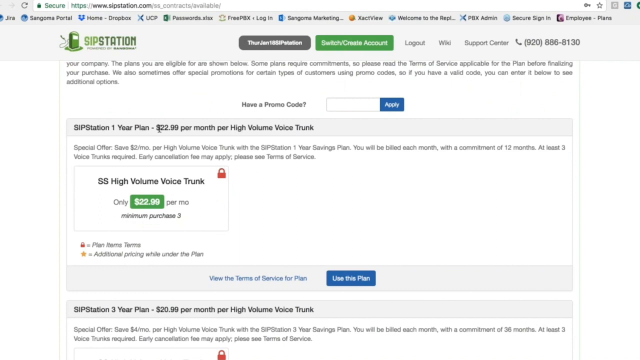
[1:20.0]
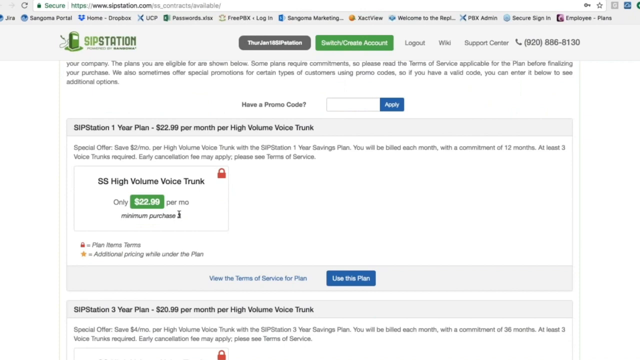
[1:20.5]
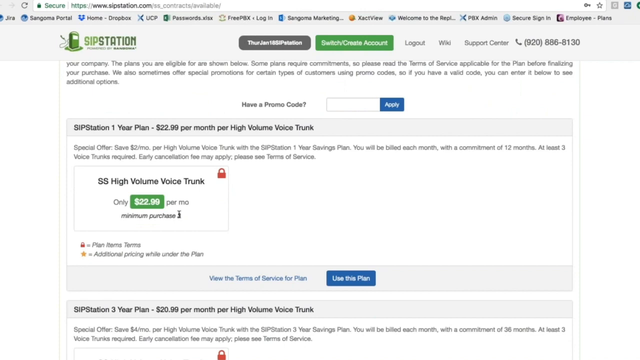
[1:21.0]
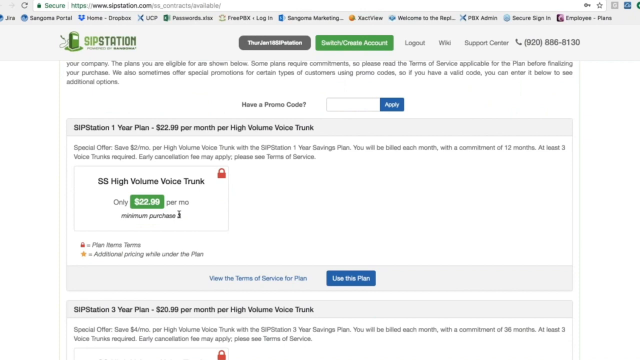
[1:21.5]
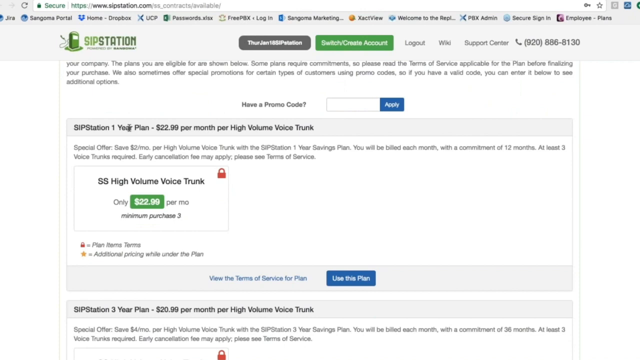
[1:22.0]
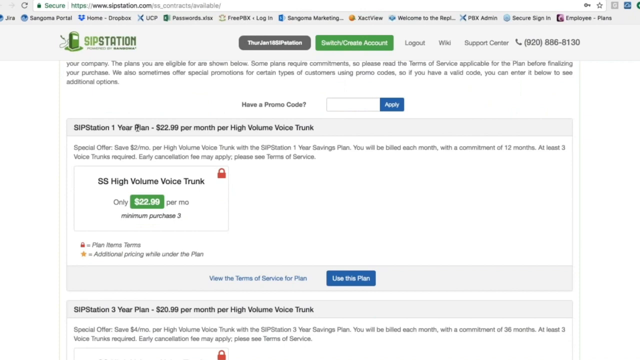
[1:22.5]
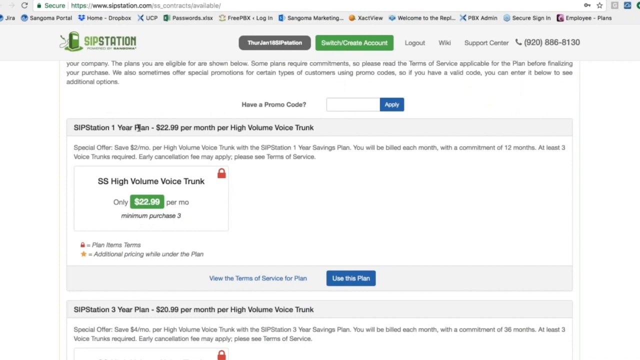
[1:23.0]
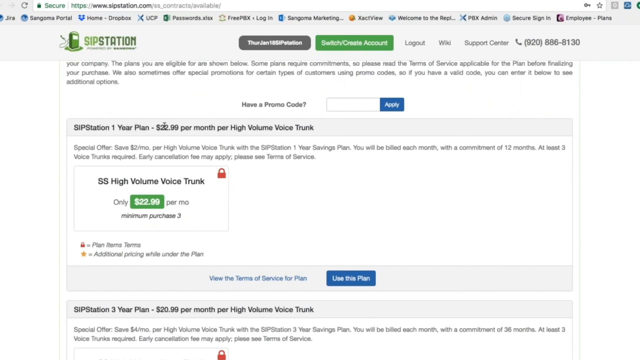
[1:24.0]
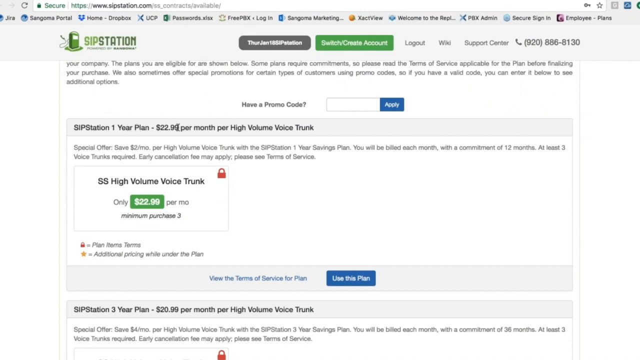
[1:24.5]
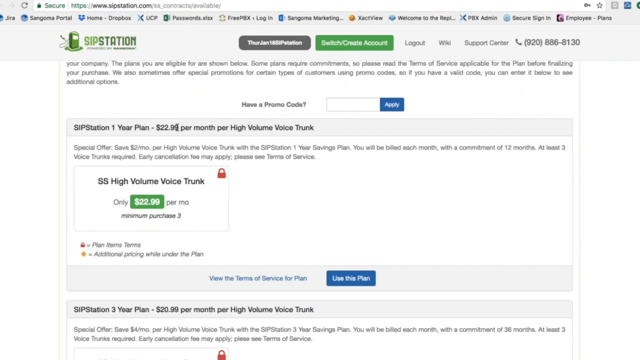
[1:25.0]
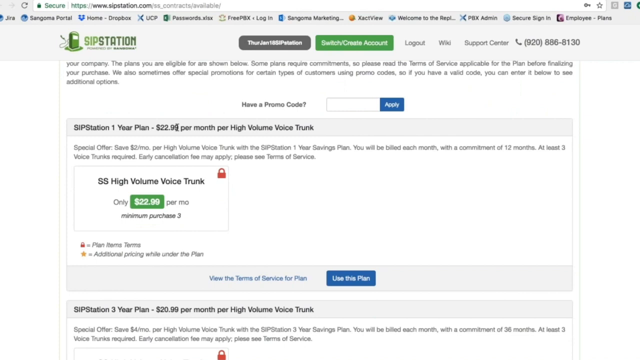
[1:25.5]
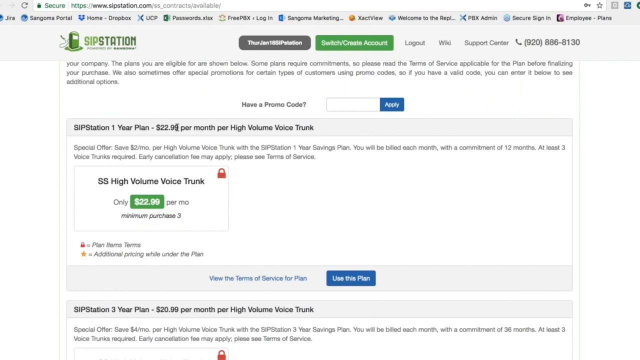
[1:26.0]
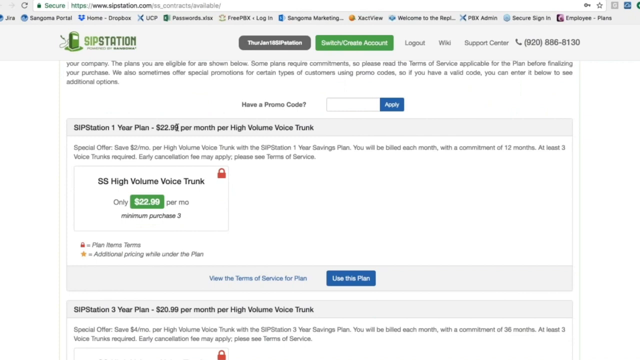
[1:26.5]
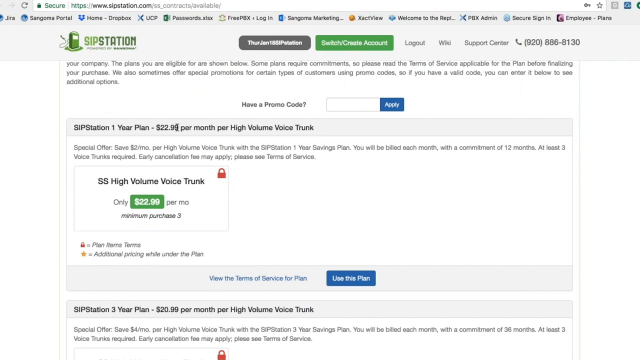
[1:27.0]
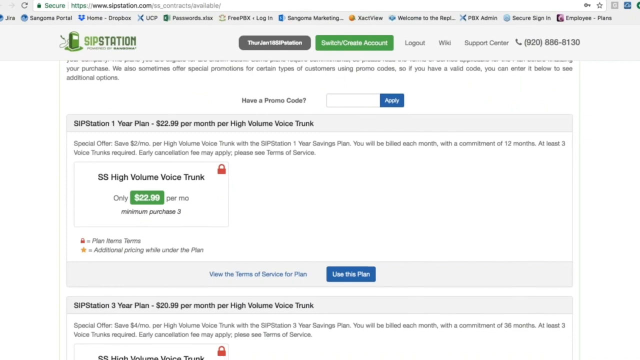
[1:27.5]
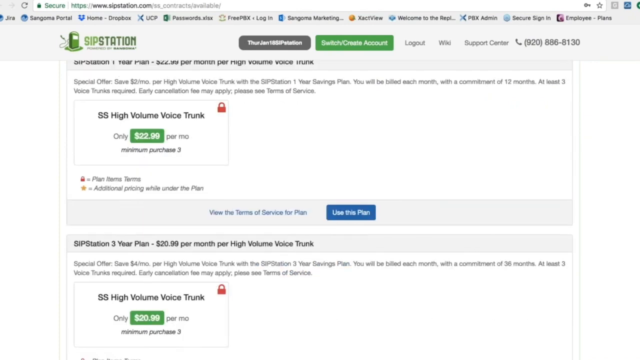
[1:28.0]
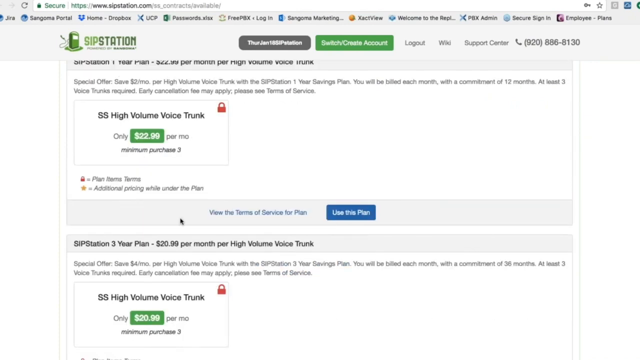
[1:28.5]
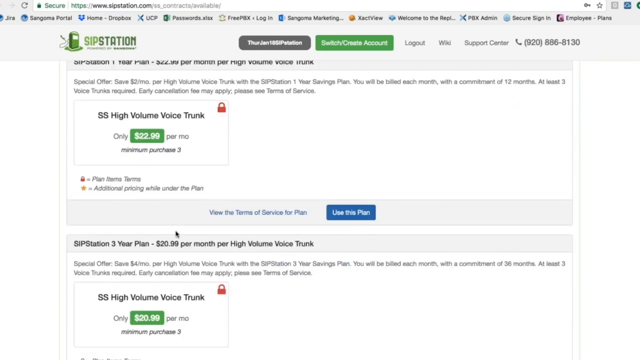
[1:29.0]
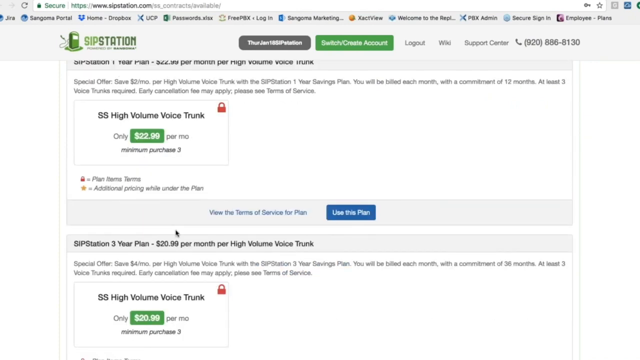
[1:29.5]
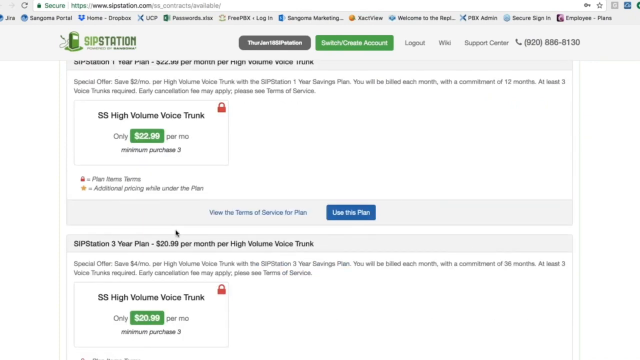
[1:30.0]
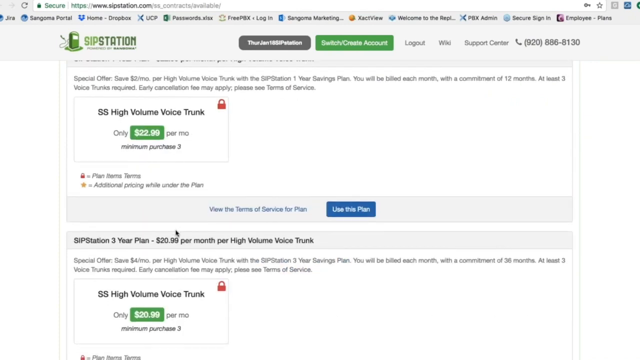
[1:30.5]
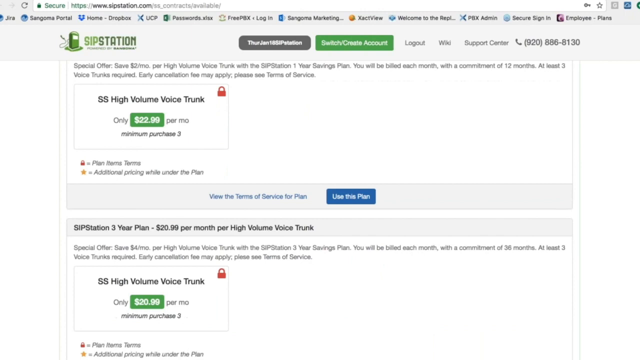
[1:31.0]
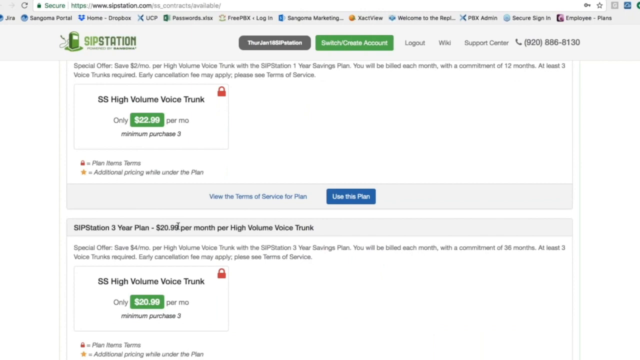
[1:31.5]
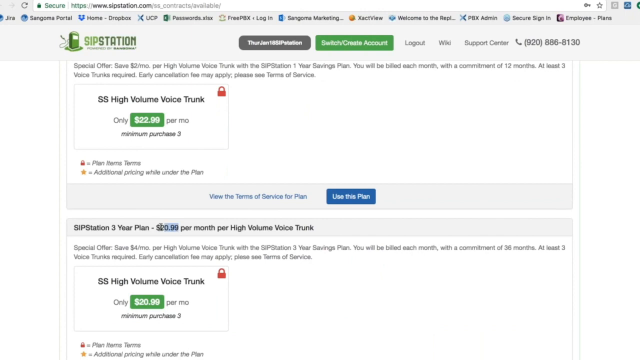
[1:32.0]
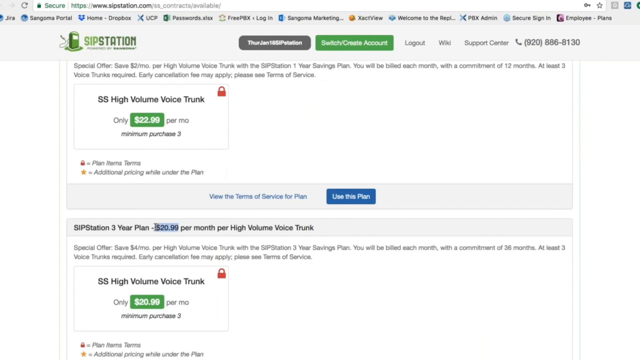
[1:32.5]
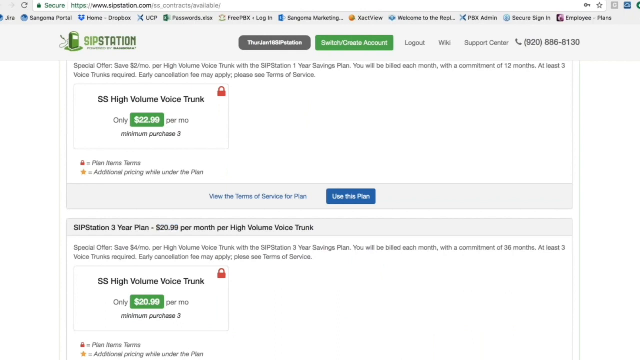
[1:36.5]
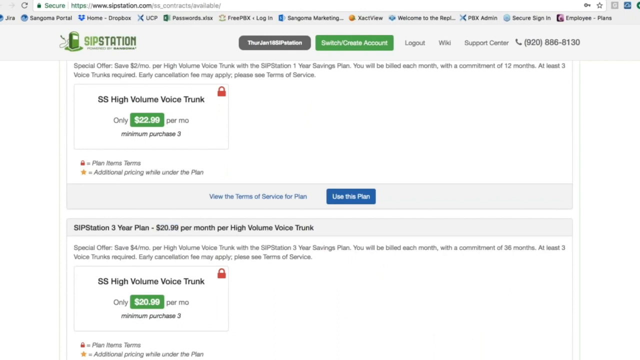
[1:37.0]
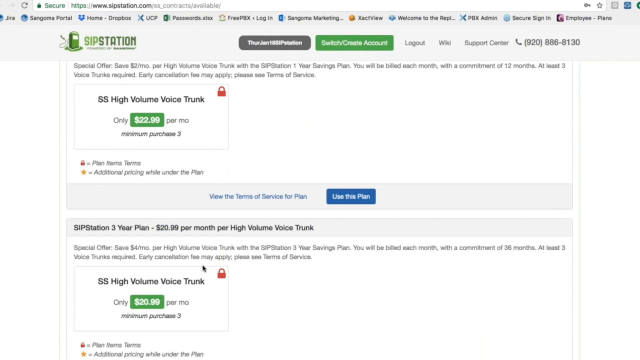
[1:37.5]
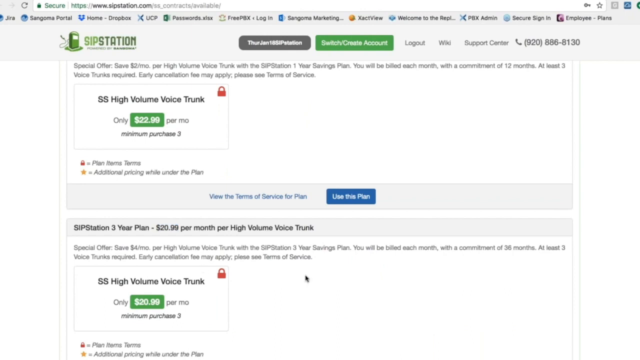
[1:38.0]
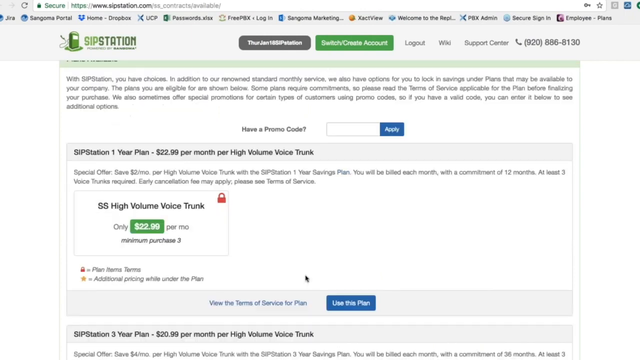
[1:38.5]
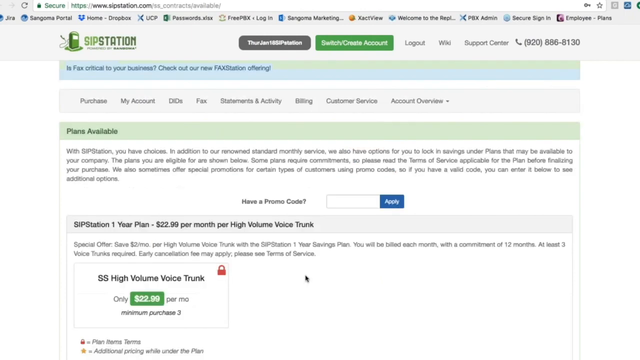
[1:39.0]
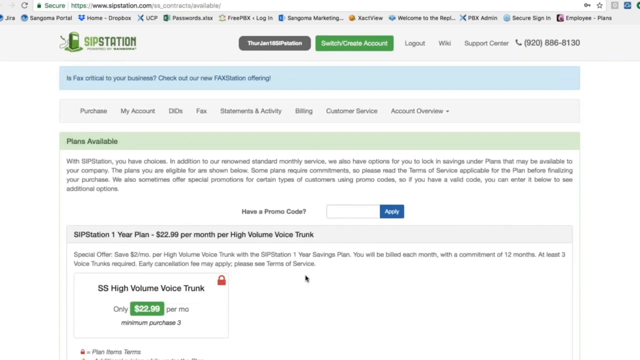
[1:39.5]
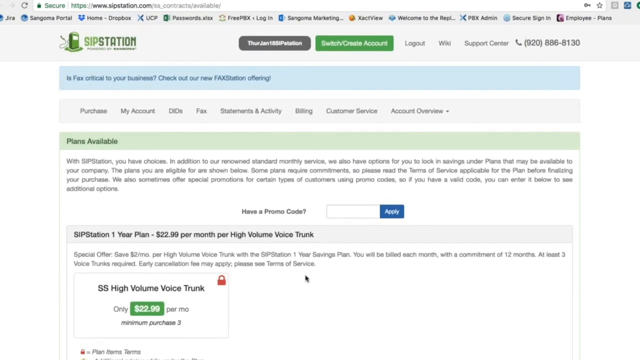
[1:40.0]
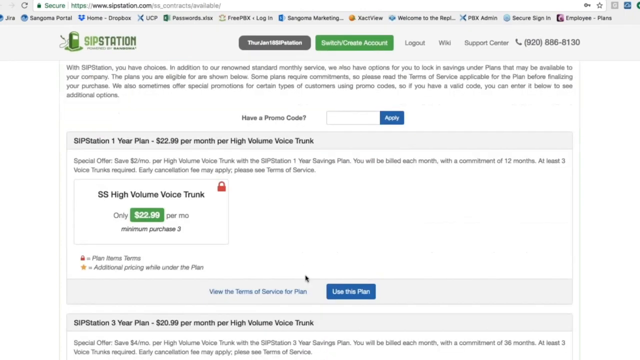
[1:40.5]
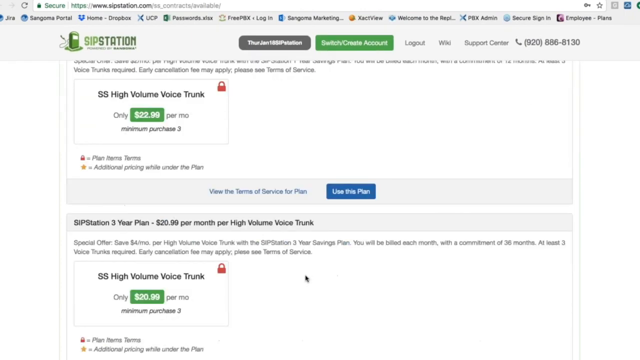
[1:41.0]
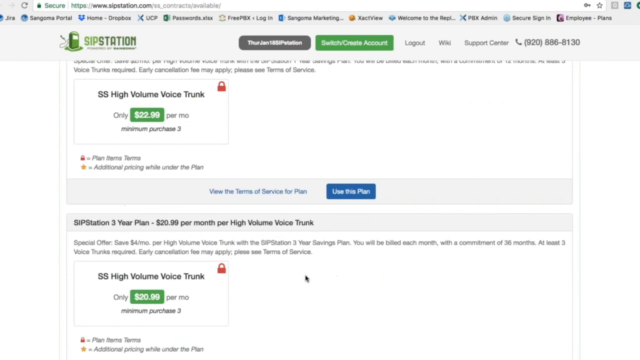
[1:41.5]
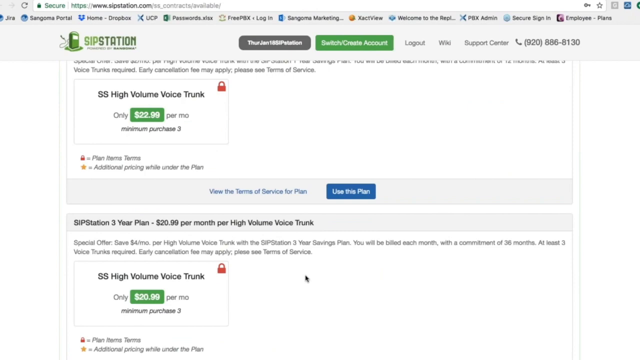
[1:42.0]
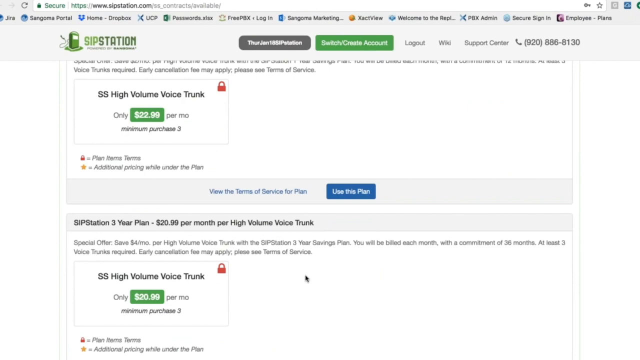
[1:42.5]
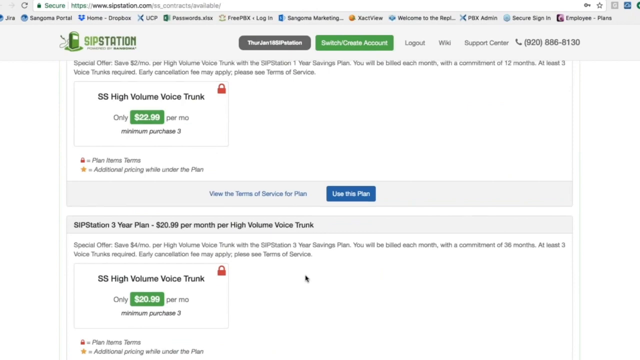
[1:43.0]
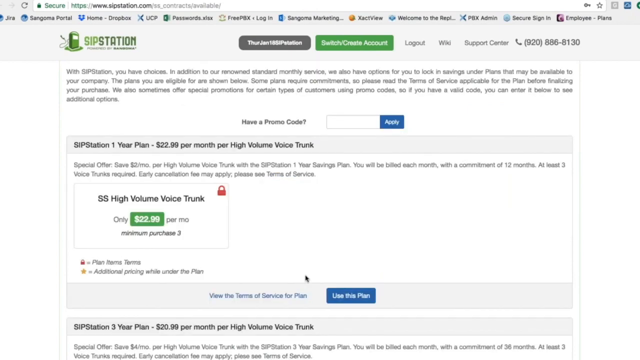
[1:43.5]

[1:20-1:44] The website SIP Station is shown, with its name at the very top left, displaying a plan: "SIP Station, one year plan, $22.99 per month, per high volume voice trunk." Another box below says "SS High Volume Voice Trunk" at only $22.99 per month, and the mouse highlights the text for that option. The page scrolls down and highlights another option, "SIP Station, three year plan," listed at $20.99 per month, with the $20.99 specifically highlighted. The page then scrolls back up to the start and back down again, showing the two available plans, a one-year and a three-year plan.